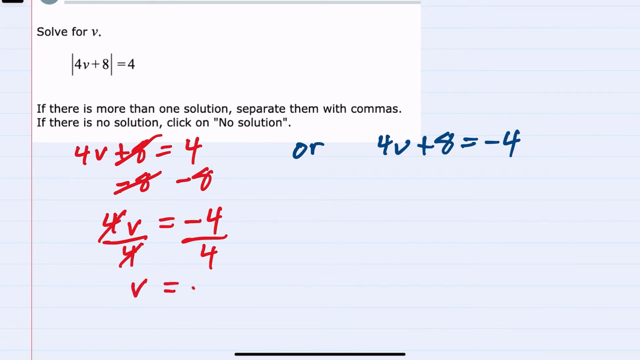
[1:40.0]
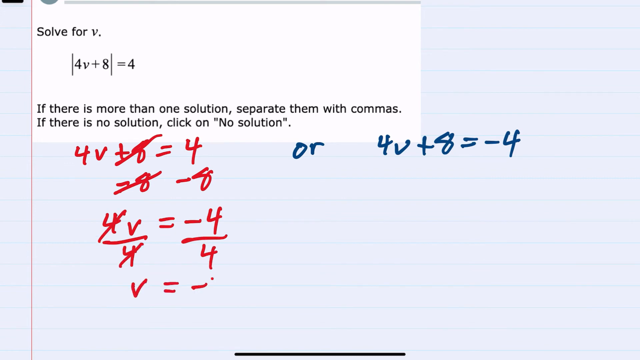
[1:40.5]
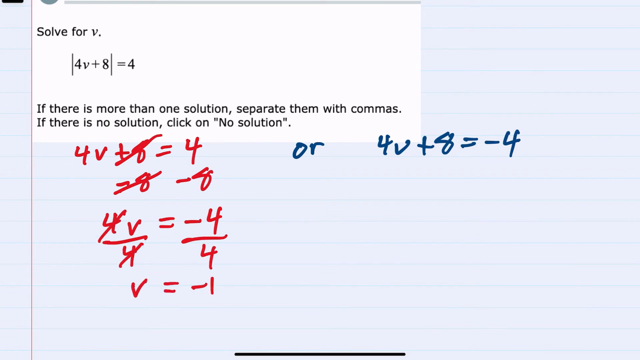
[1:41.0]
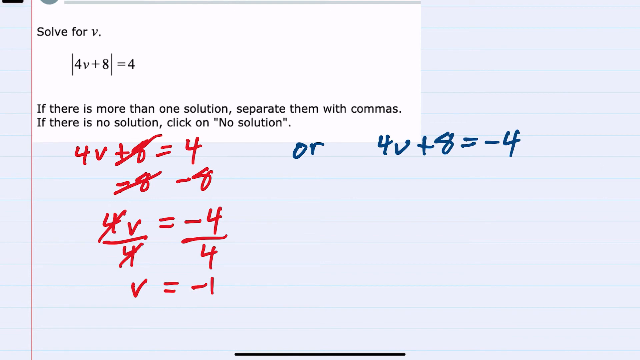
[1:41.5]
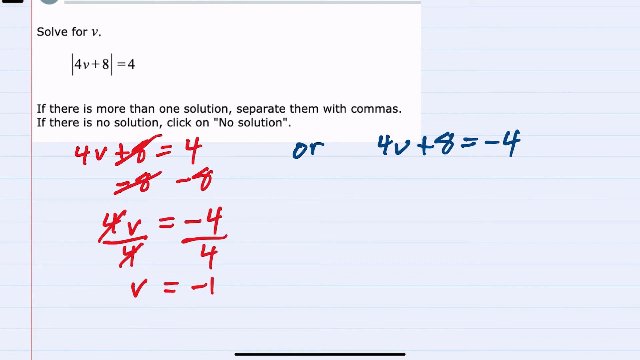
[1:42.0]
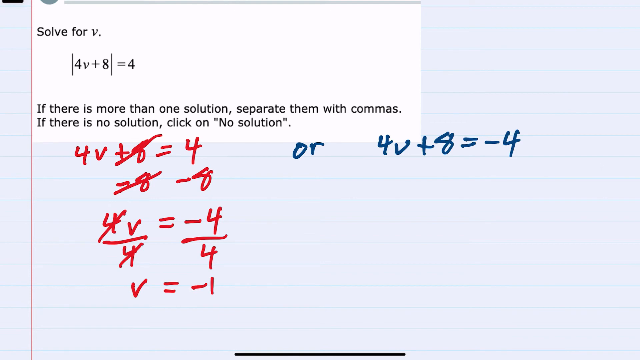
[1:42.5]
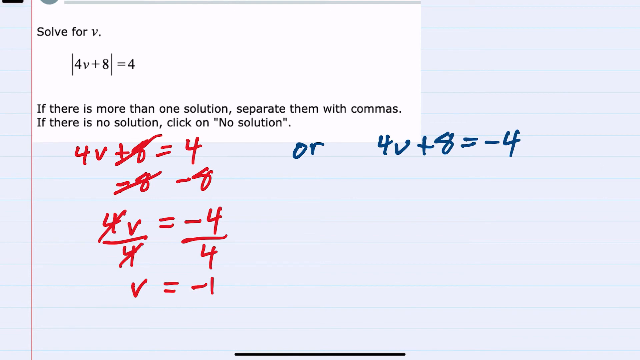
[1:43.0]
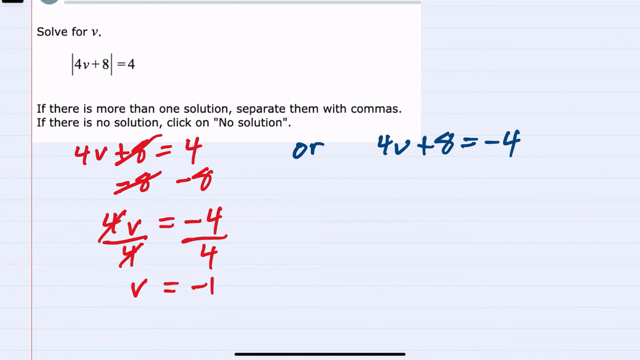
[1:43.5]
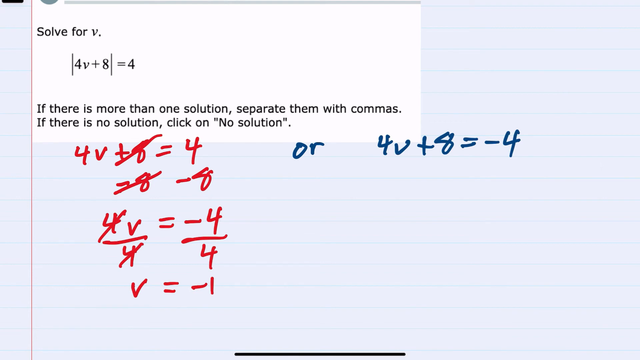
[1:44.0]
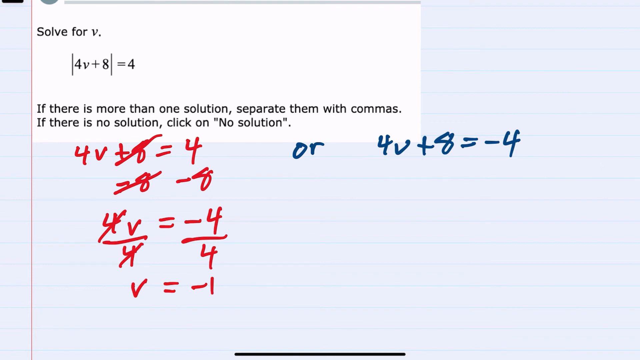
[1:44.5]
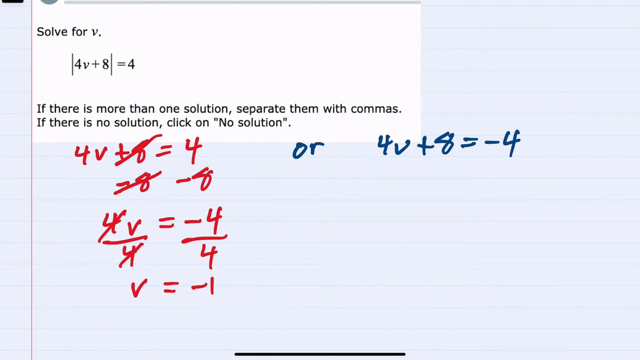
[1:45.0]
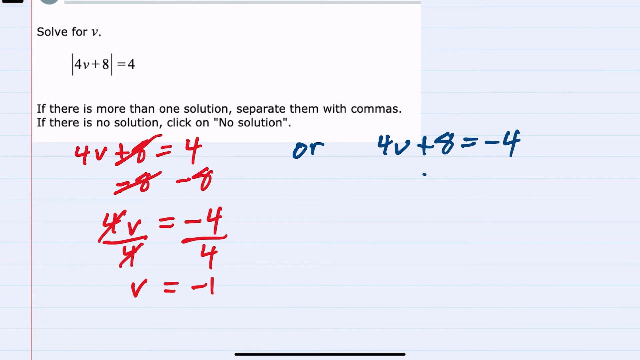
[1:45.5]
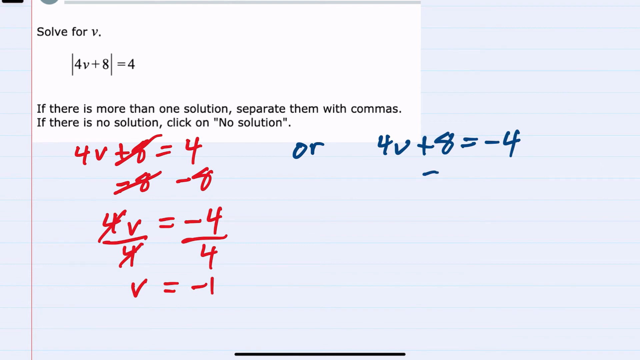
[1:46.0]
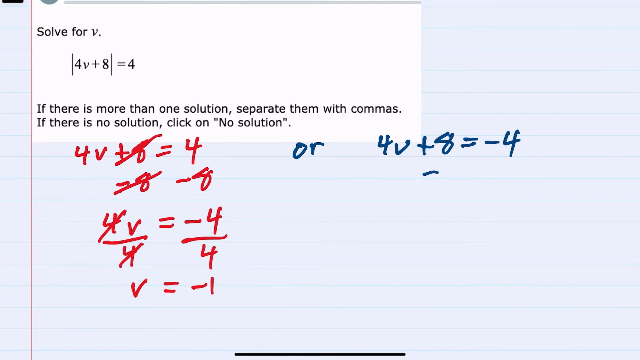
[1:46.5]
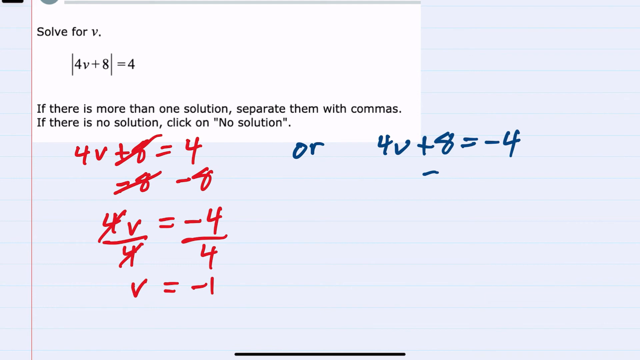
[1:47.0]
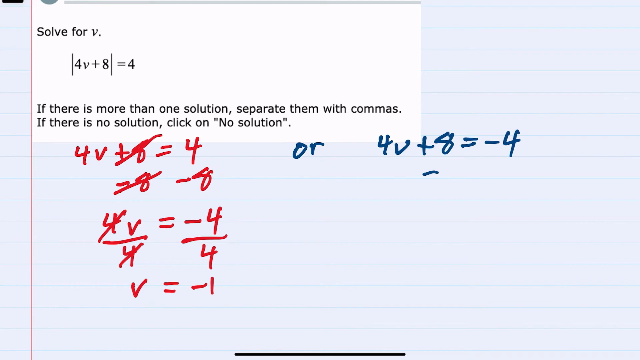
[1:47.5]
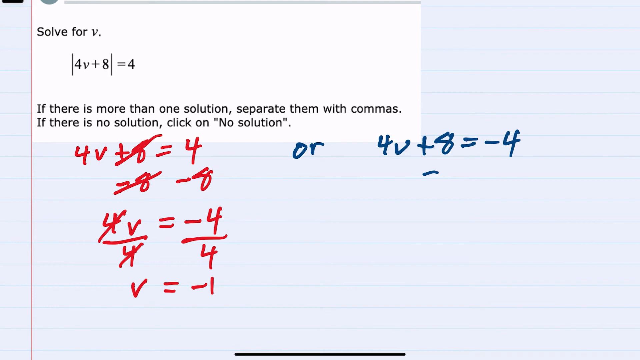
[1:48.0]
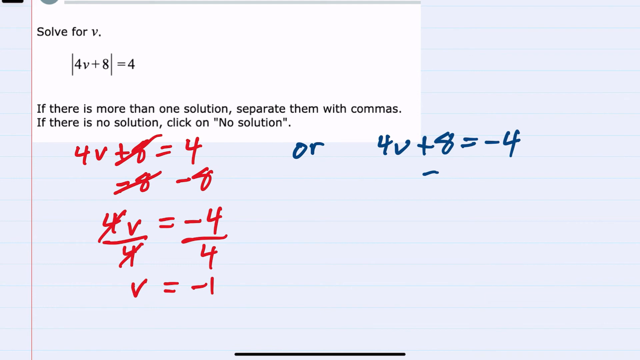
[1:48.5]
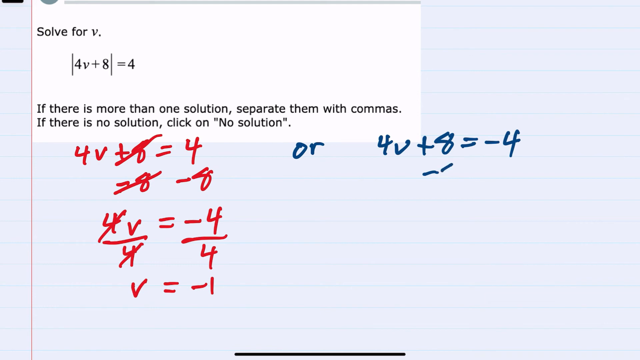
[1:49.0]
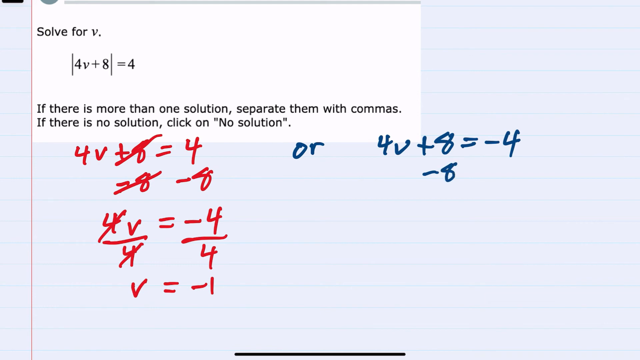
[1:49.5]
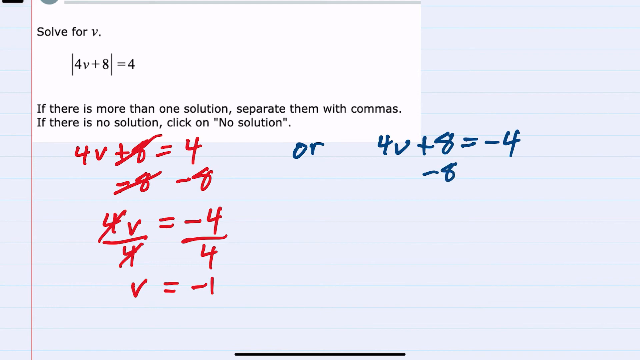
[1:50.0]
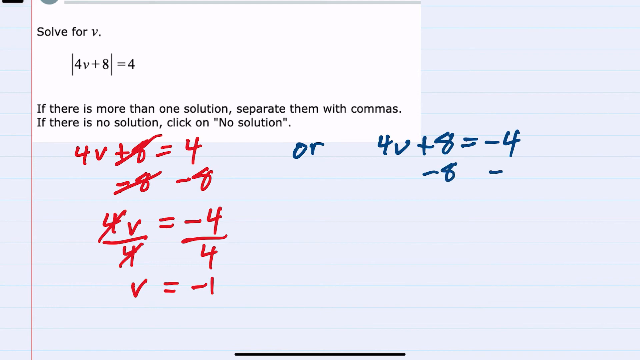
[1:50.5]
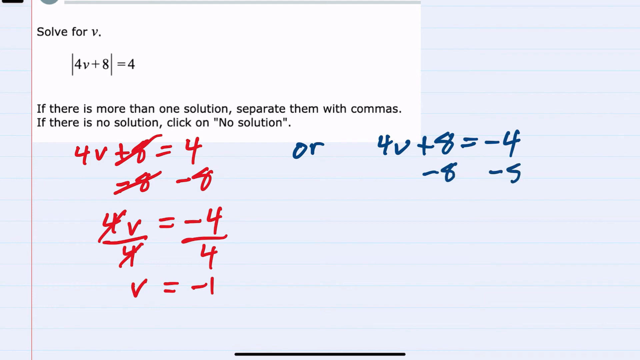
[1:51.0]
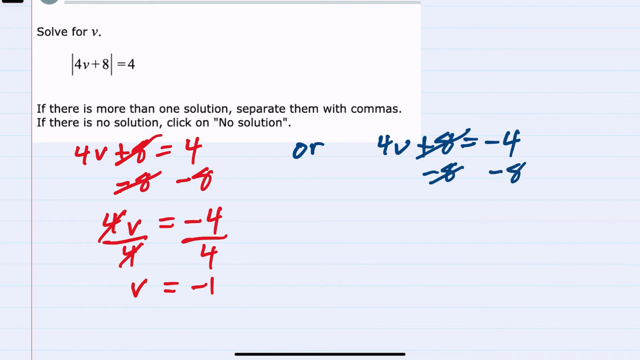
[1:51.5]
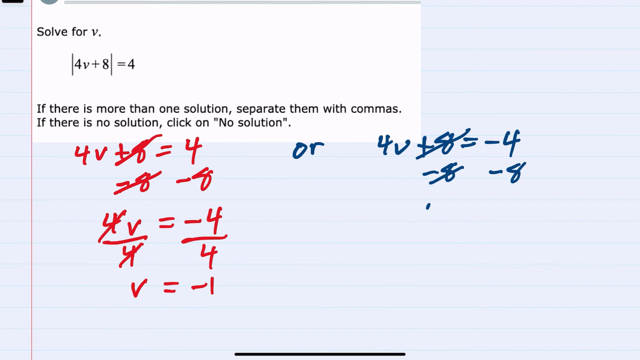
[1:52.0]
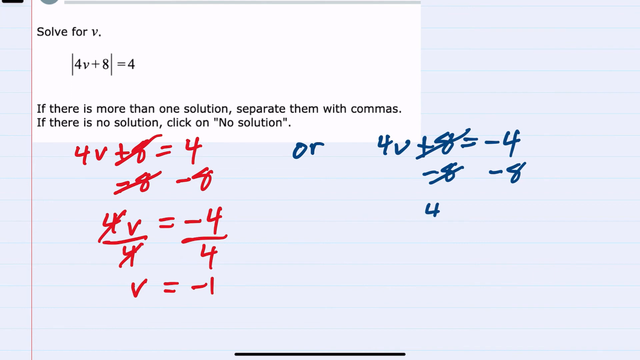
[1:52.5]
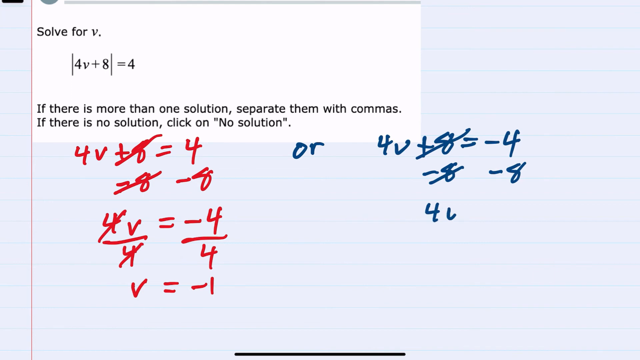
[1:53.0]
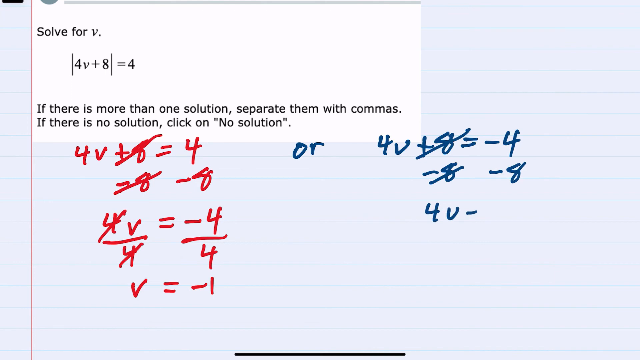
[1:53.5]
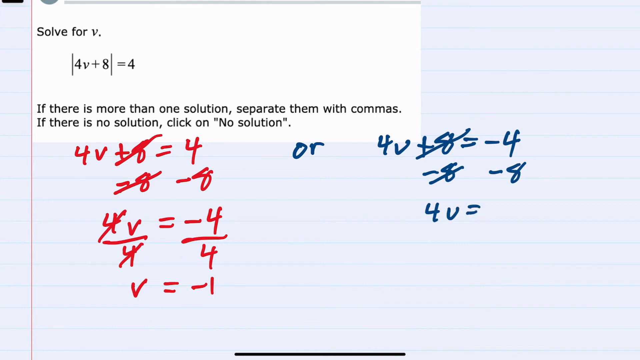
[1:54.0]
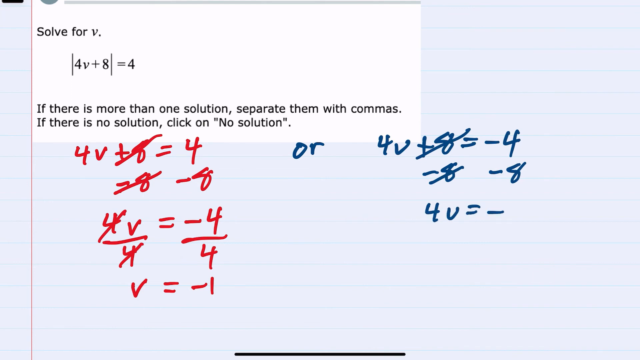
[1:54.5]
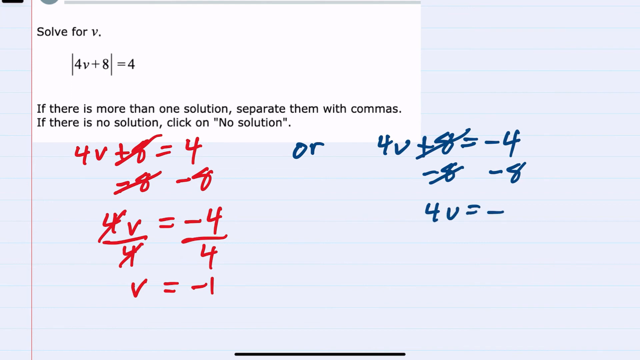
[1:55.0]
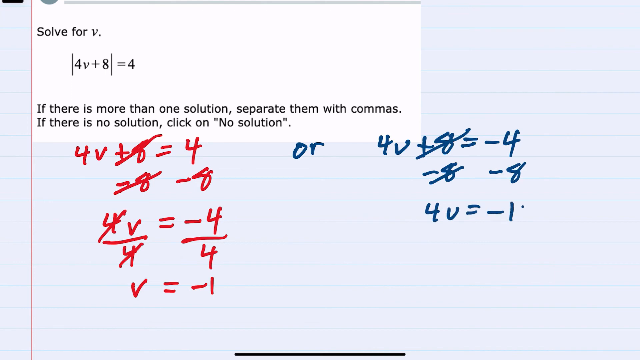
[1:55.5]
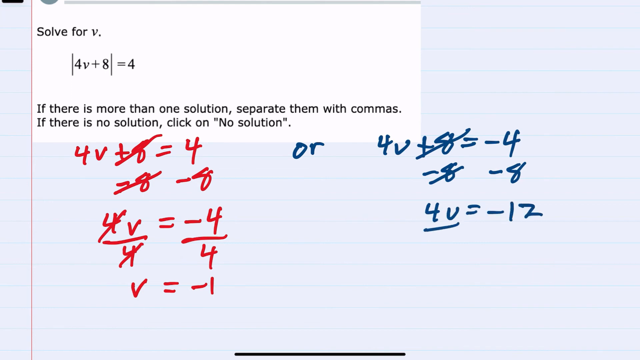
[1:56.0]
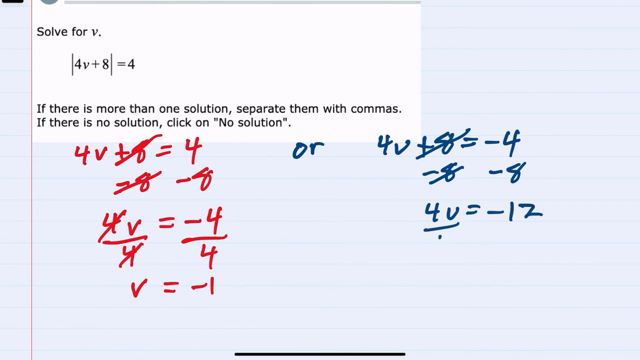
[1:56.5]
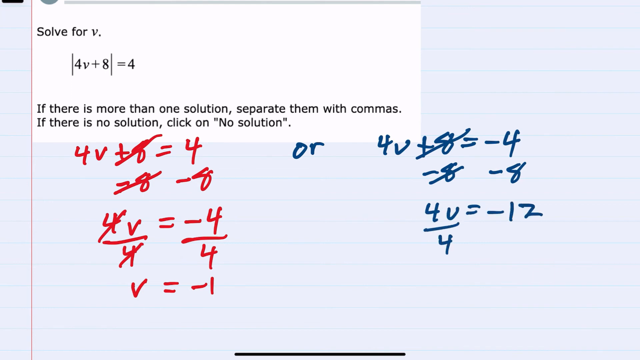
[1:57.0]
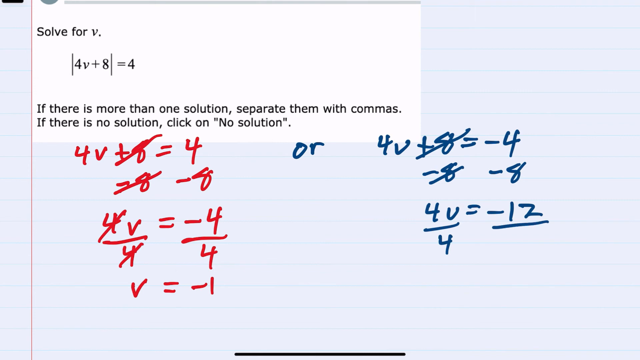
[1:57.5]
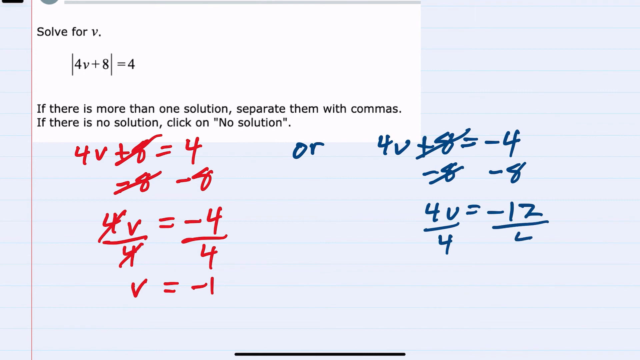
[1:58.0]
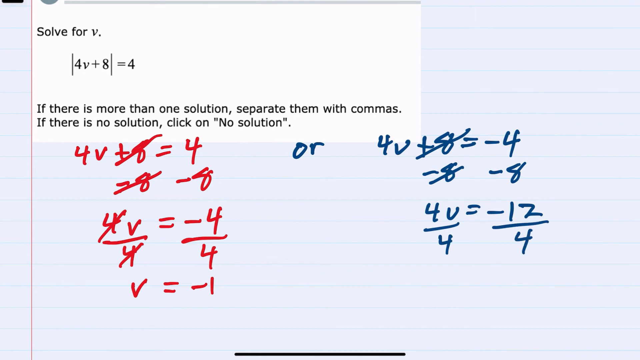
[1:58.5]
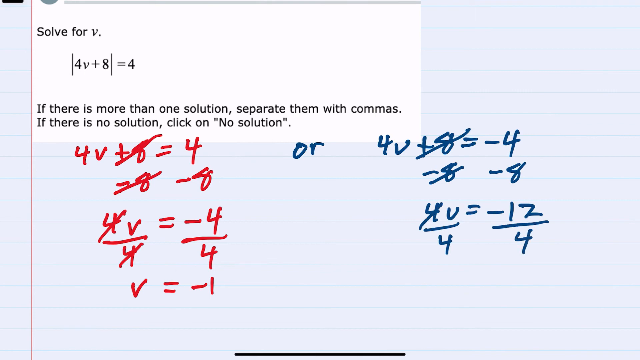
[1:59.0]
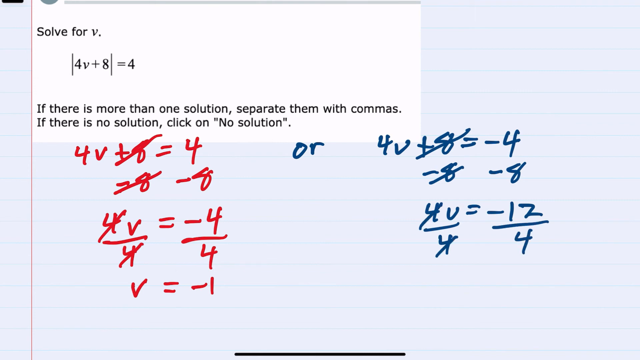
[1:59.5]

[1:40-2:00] The image looks like a piece of paper with an overlay reading "solve for v" at the top and "4v + 8 = 4" underneath. The instructions read "if there is more than one solution, separate them by commas. If there is no solution, click on no solution." Below, the author has already started to solve the problem: for 4v + 8 = 4, 8 is subtracted from each side and the answer does not work out. The author then works on 4v + 8 = -4, which also does not work out.